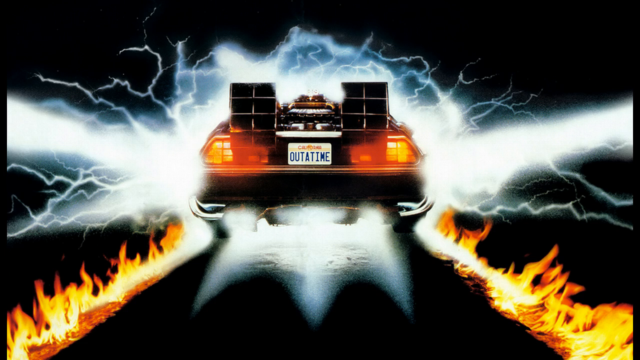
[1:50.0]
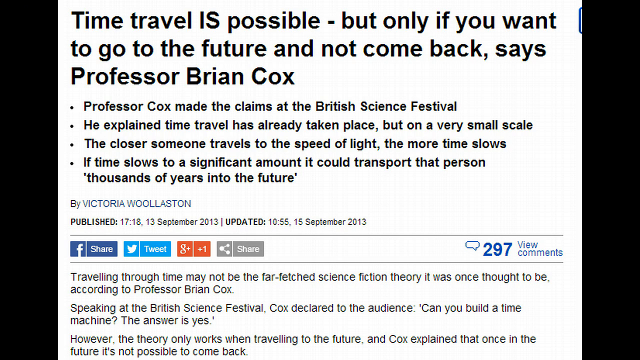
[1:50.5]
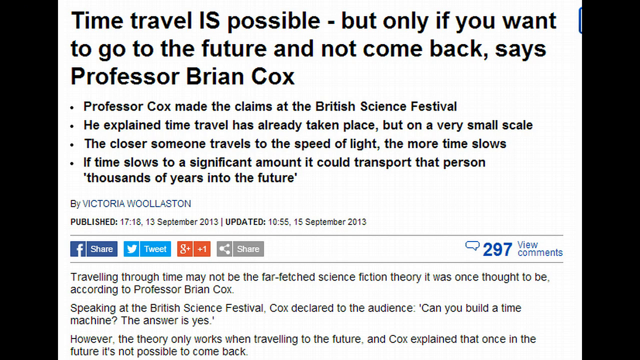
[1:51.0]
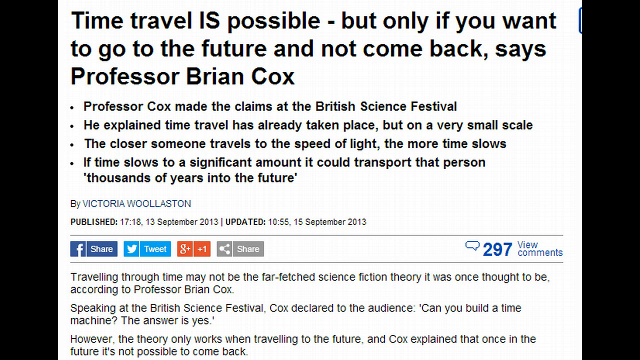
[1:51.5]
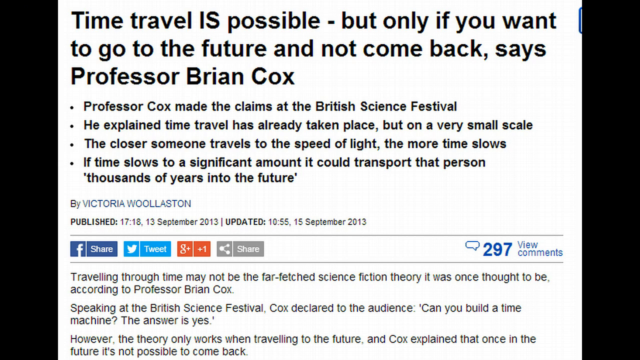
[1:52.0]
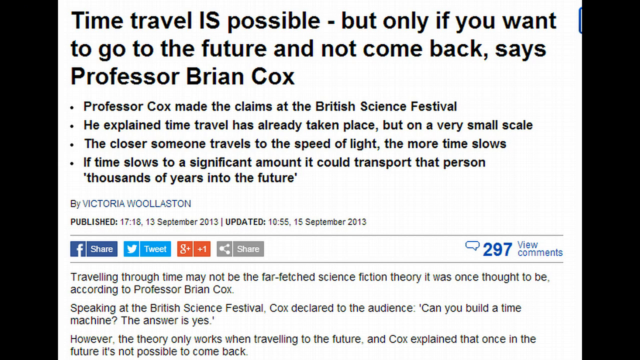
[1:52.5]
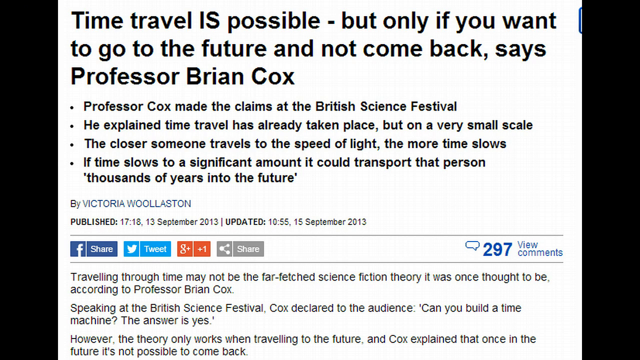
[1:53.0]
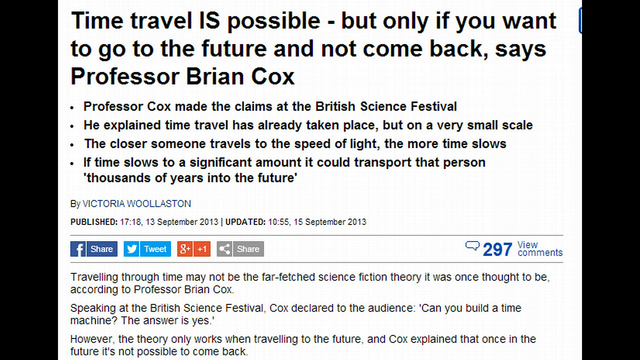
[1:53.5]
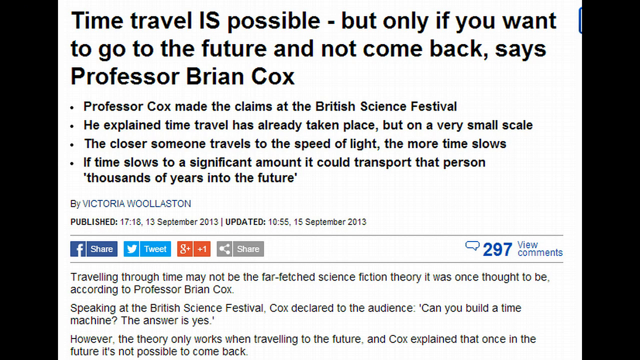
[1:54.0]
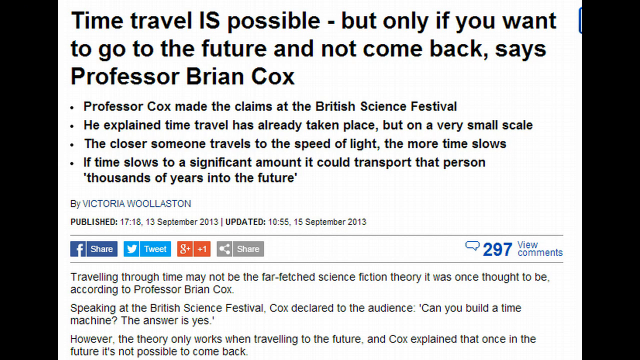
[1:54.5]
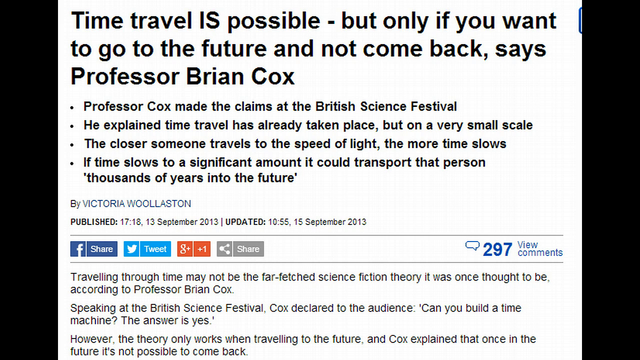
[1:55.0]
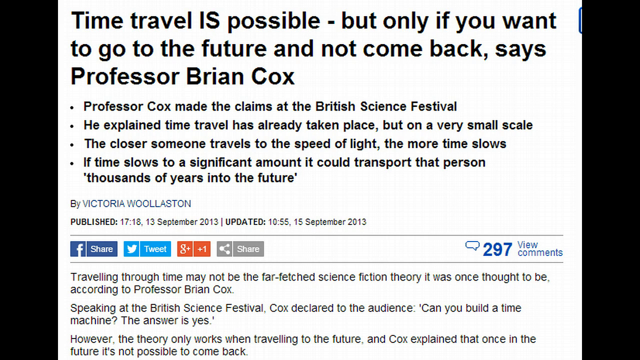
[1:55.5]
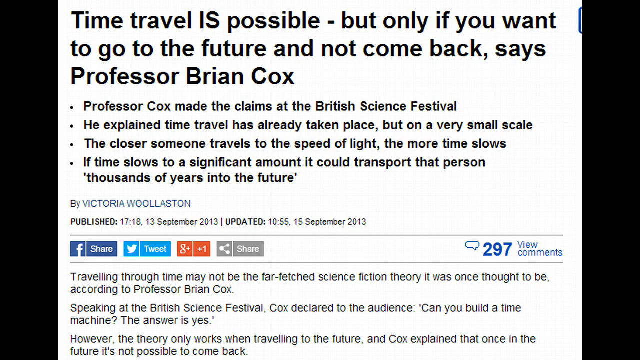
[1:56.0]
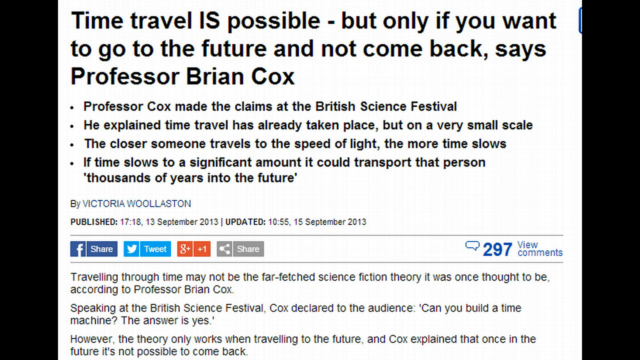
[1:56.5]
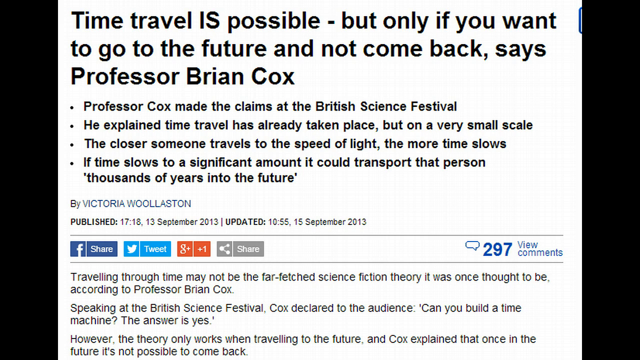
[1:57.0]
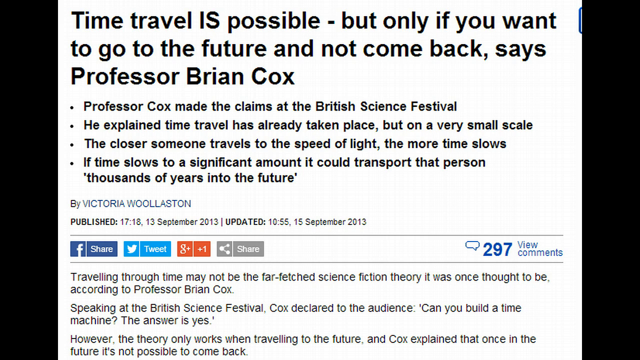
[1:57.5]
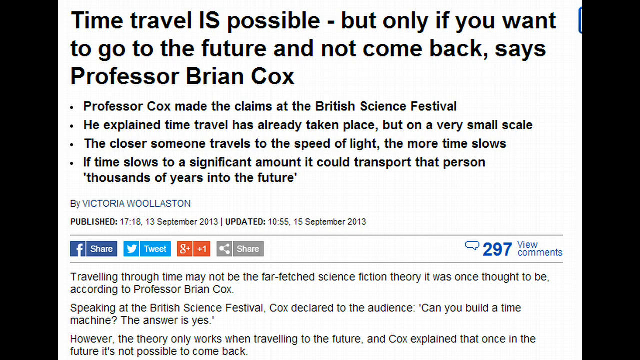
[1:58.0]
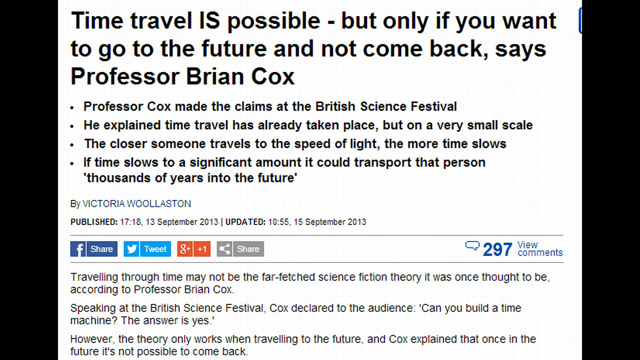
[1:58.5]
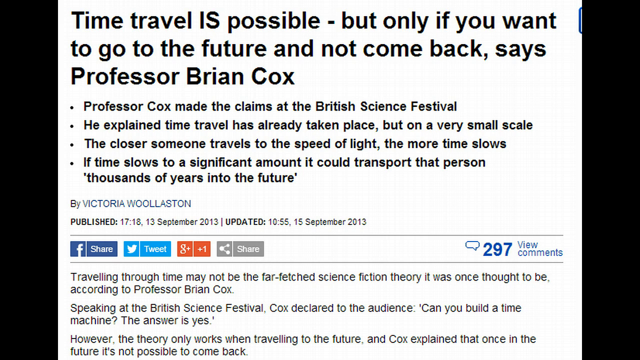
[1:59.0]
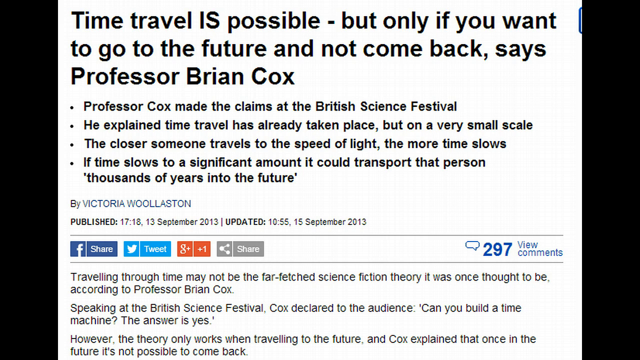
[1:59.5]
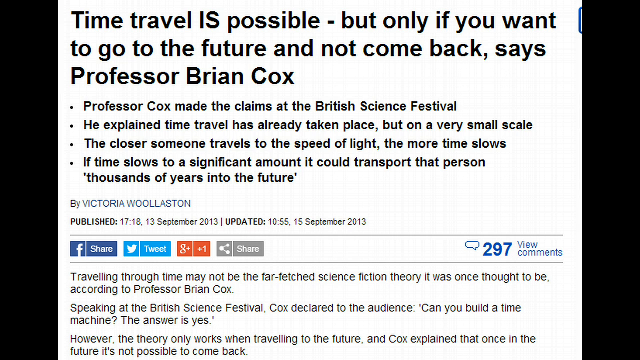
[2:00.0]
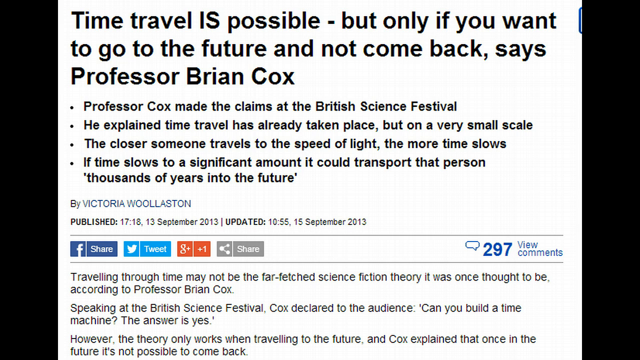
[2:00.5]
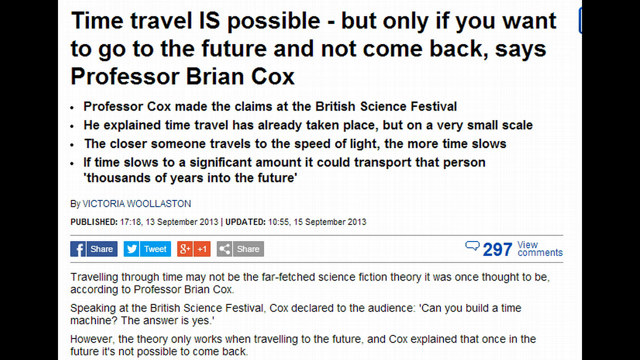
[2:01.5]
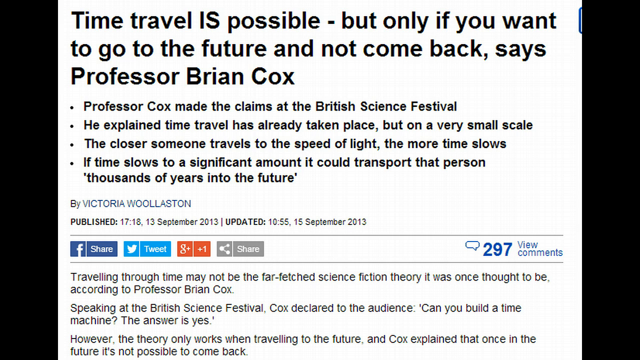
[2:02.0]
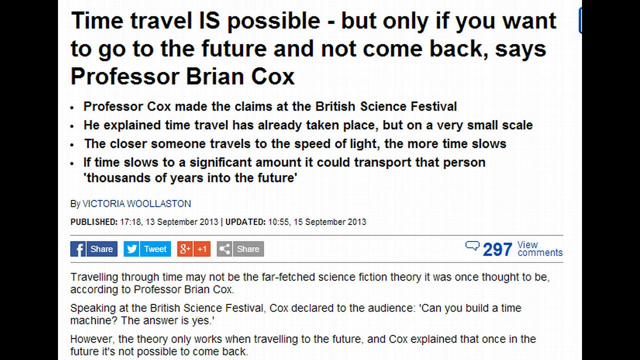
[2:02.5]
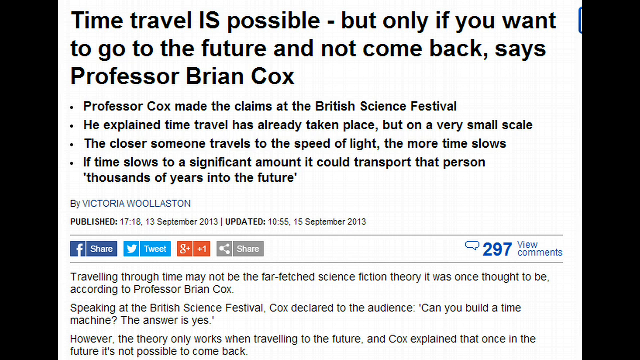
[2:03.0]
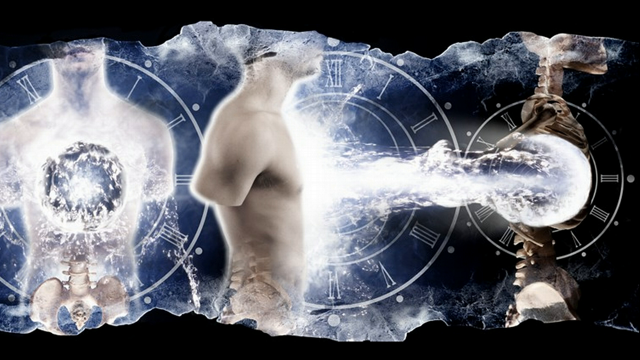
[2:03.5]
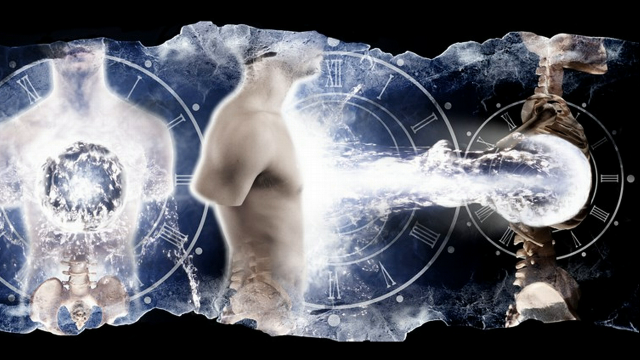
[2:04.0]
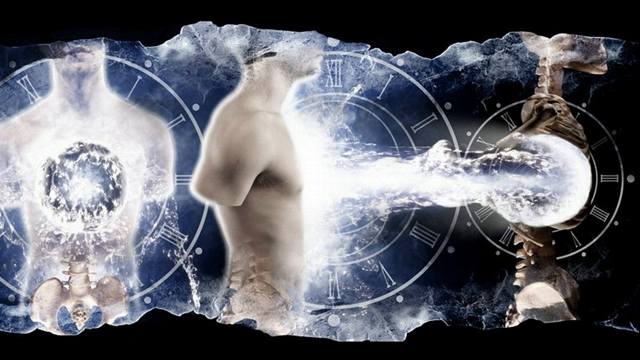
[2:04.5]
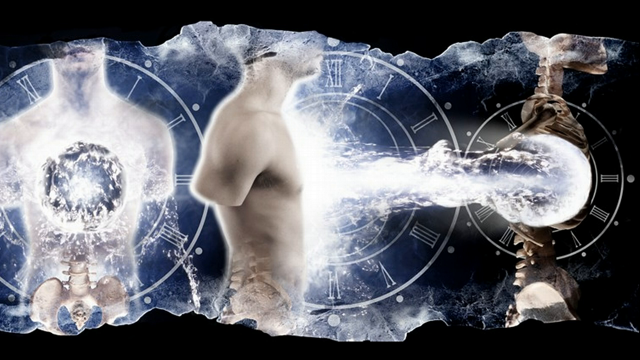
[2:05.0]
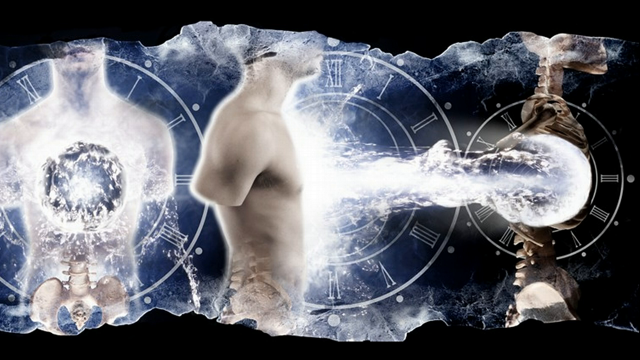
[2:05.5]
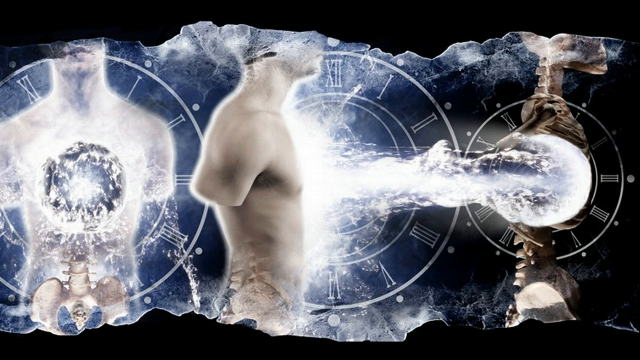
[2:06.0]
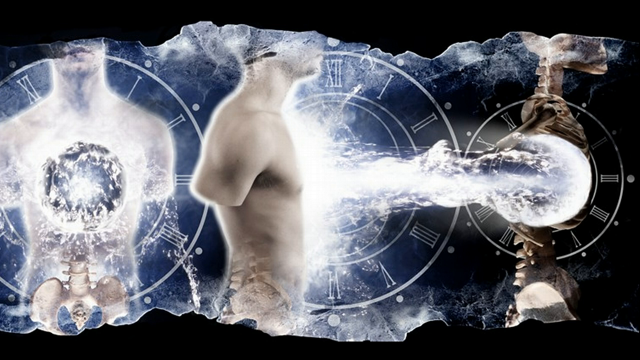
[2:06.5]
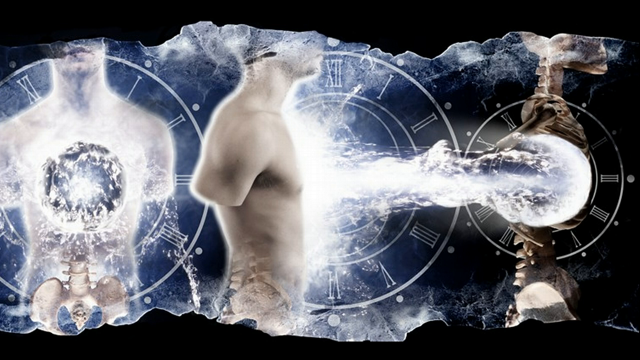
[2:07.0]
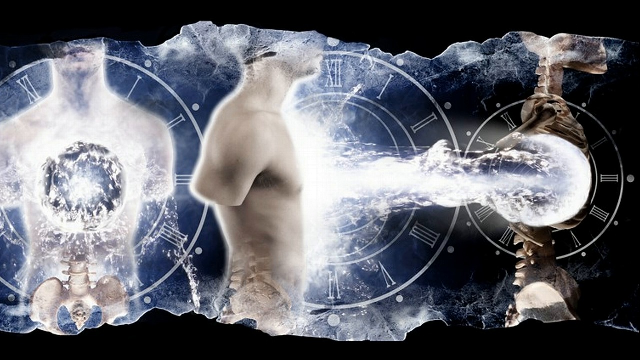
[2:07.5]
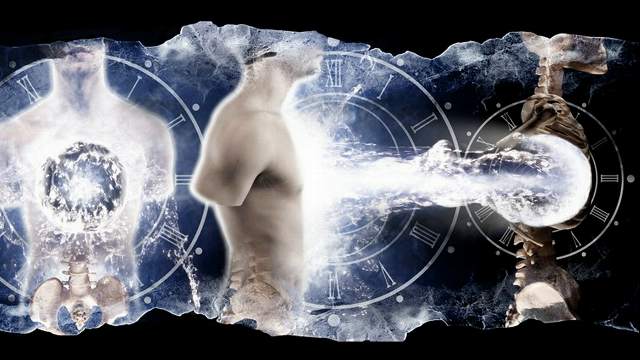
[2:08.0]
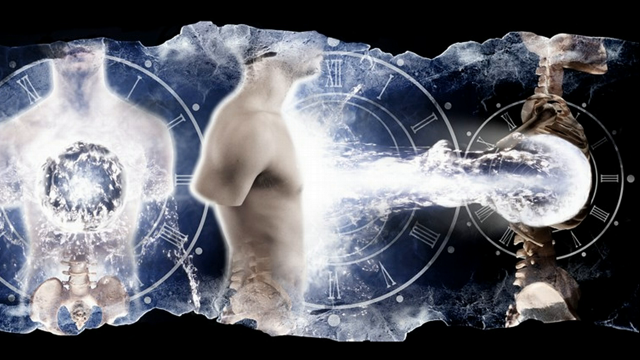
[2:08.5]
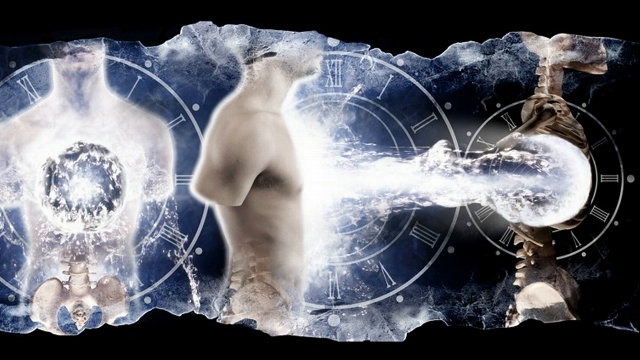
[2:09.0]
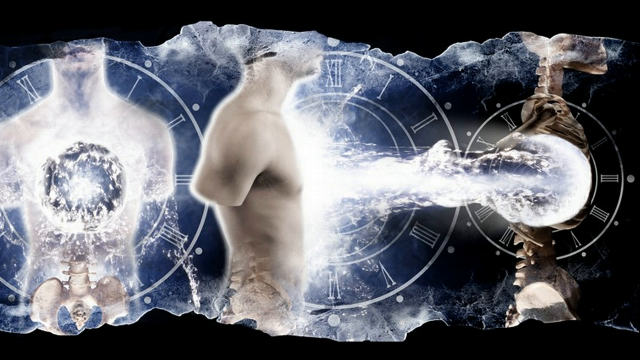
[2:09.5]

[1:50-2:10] An image of another article appears, with the headline "Time travel is possible, but only if you want to go to the future and not come back." It says "Professor Brian Cox." Below the headline is a summary reading "Professor Cox made the claim at the British Science Festival. He explained time travel has already taken place, but on a very small scale. The closer someone travels to the speed of light, the more time slows." The article was written by Victoria Bliston, was published on September 13, 2013, and has three comments. Next, an image of a skeleton and a human appears, probably depicting the soul of the human going across different time dimensions.